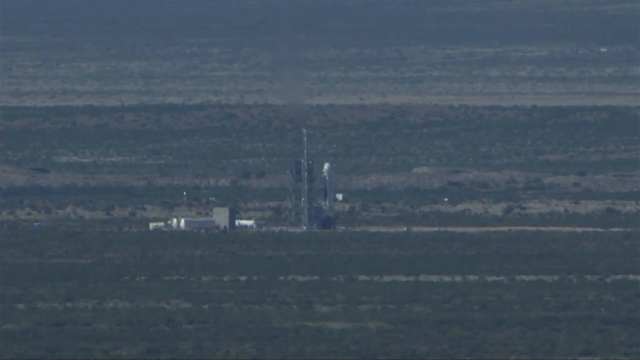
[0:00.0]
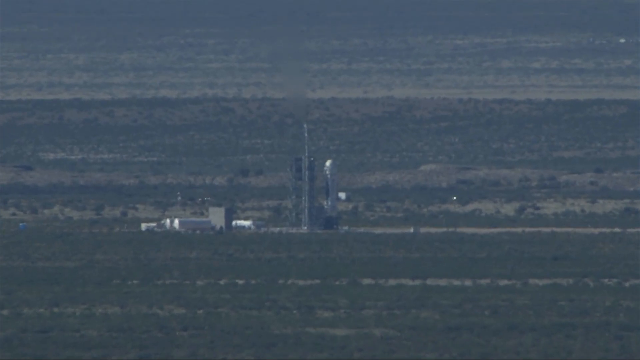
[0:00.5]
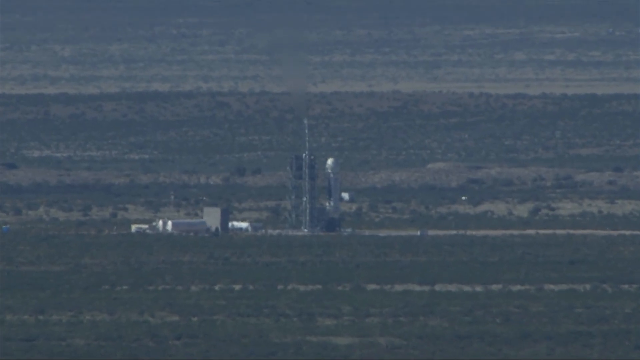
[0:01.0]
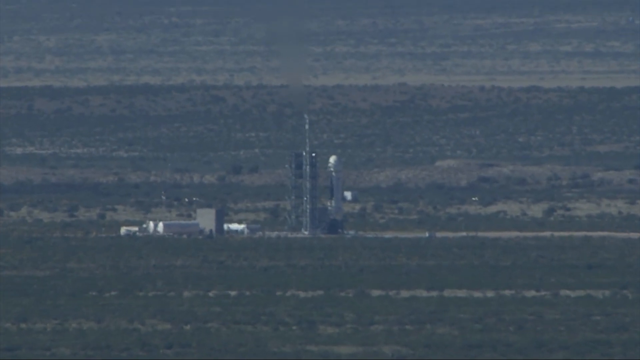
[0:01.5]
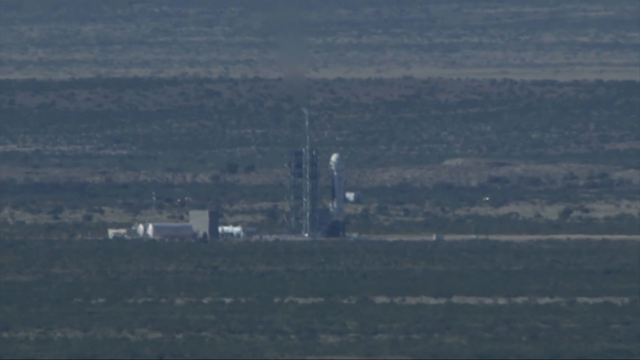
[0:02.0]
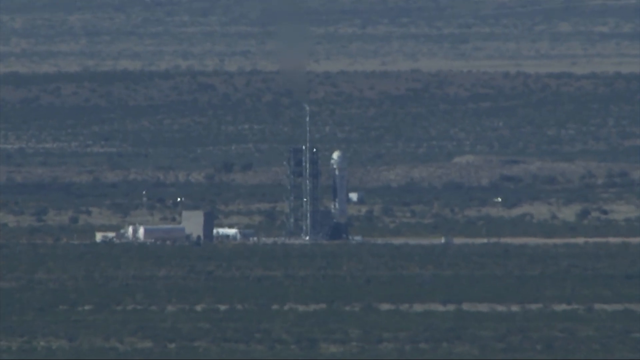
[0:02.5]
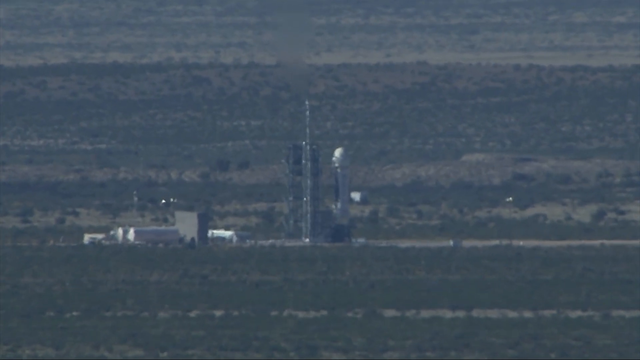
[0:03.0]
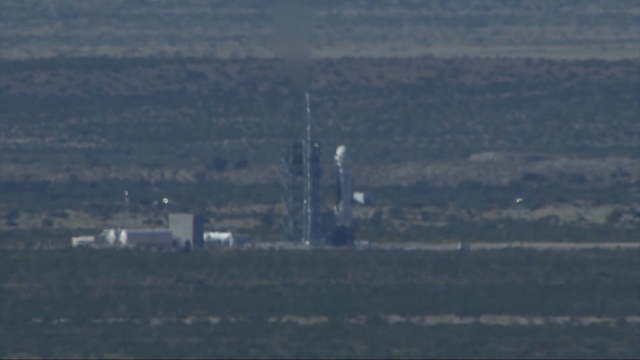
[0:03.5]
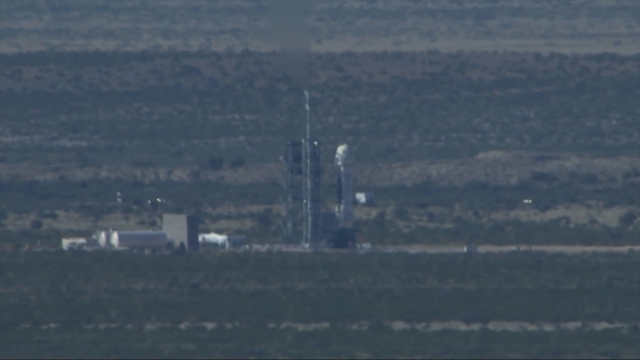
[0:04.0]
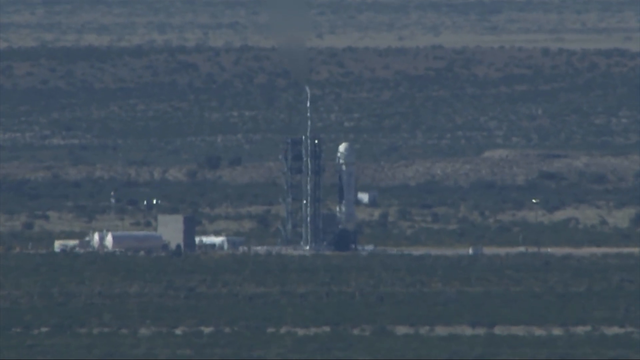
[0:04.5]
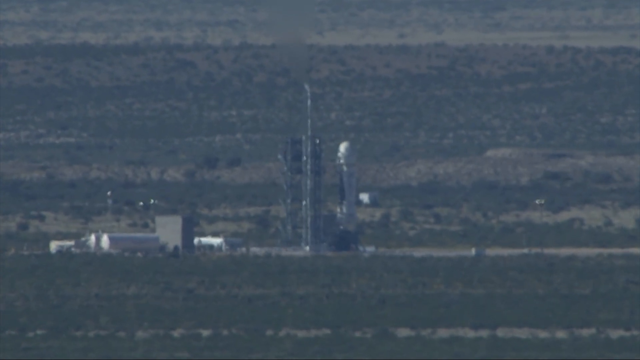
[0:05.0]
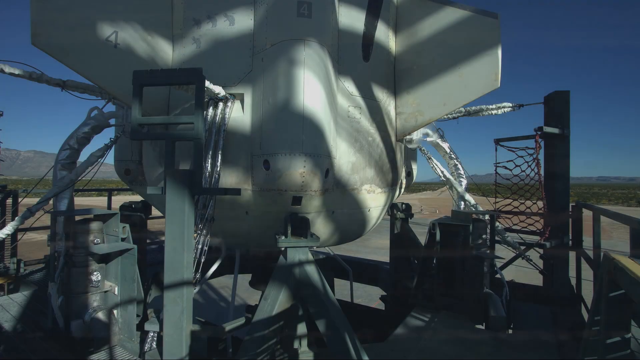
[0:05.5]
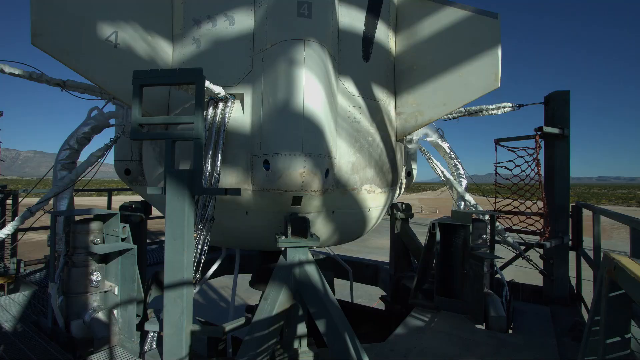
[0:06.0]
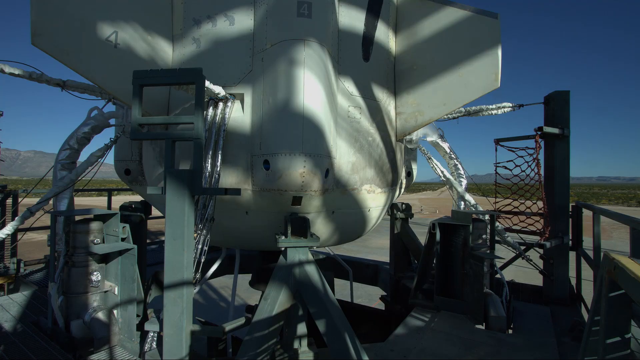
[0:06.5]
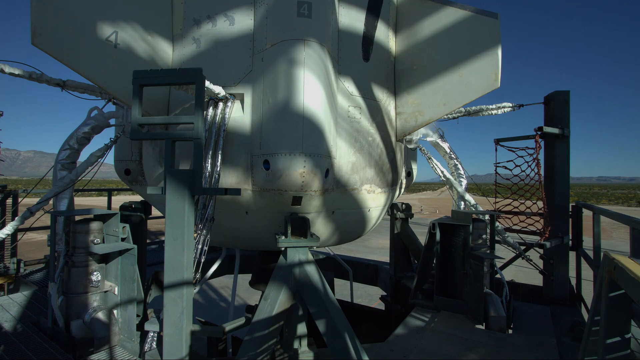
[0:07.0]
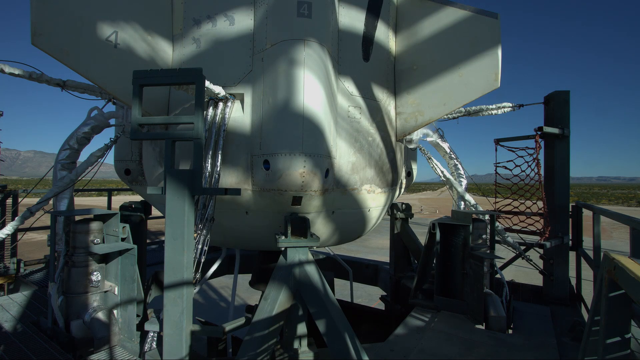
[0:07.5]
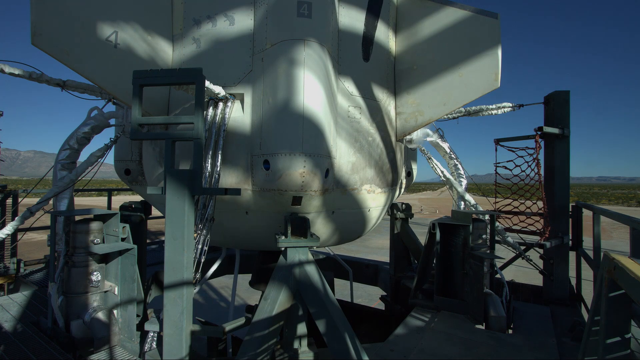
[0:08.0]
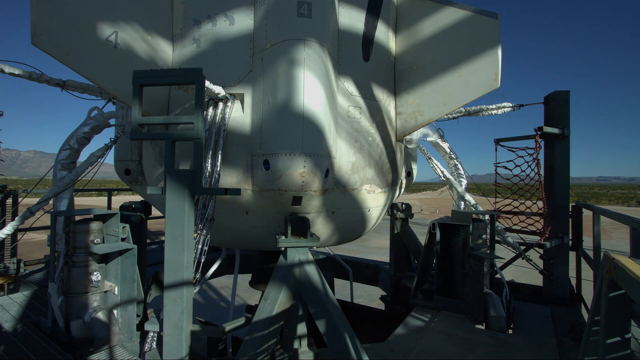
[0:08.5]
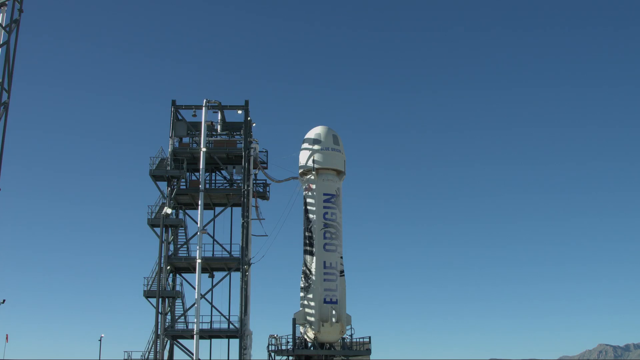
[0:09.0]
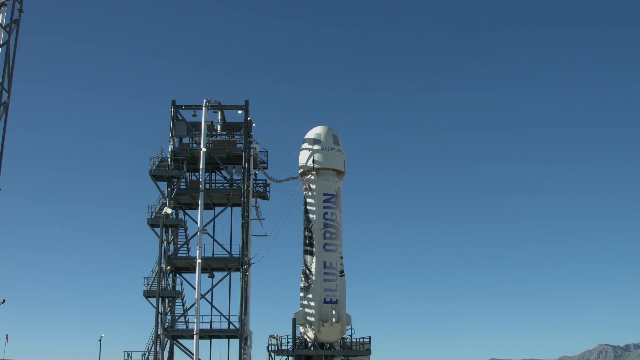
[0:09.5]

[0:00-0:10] The video opens on a rather barren landscape. In the central part of the foreground, on the left-hand side, there is a series of low buildings with a larger rectangular block in the center. Near it, about in the center of the screen, a large metal scaffolding stands next to a rocket ship and is attached to it. The buildings glint white in the sunlight, and the rocket's nose cone is also white. The land behind looks like scrub brush or desert, in shades of dark brown, light brown and tan, with very little vegetation and nothing growing. There is nothing in the foreground beyond some dark fields.